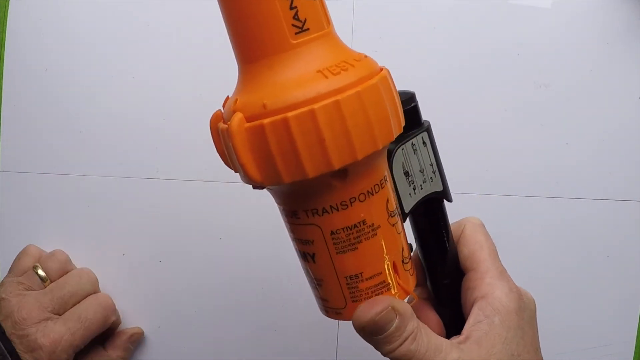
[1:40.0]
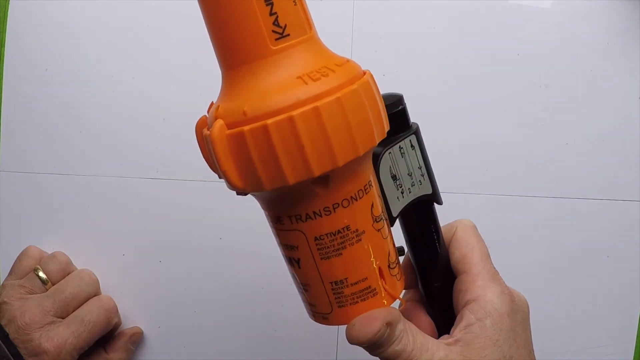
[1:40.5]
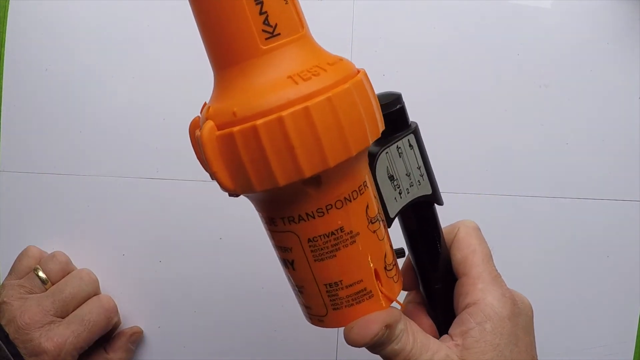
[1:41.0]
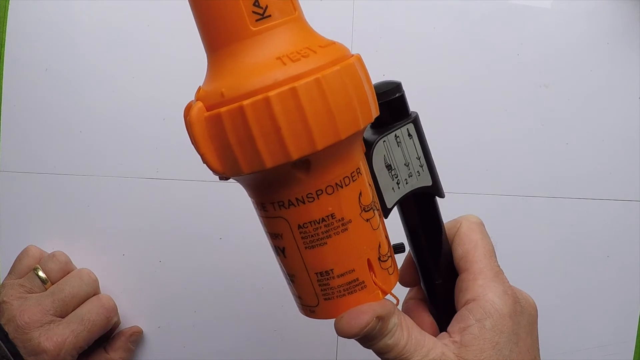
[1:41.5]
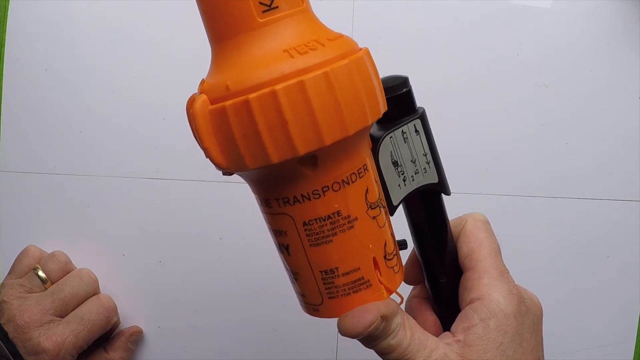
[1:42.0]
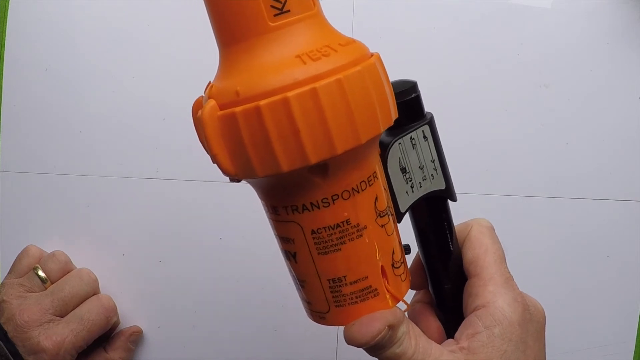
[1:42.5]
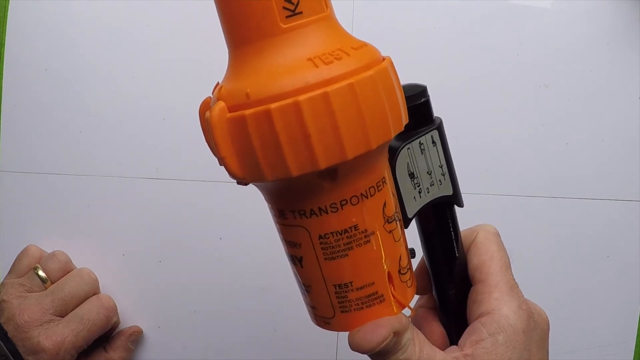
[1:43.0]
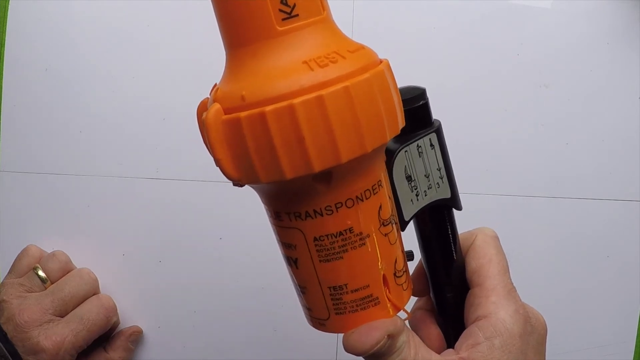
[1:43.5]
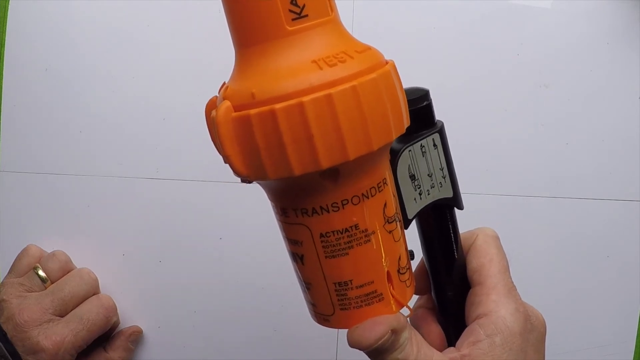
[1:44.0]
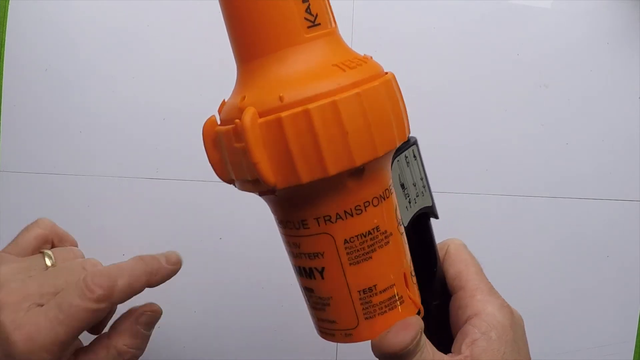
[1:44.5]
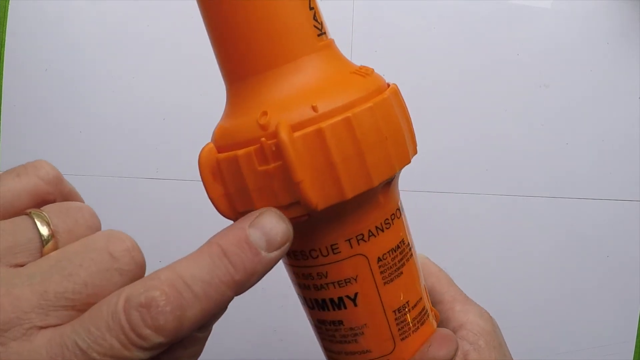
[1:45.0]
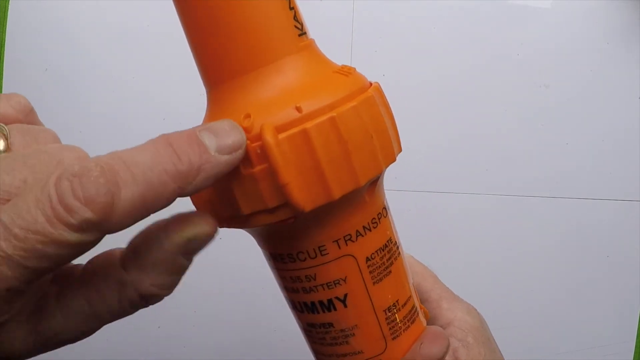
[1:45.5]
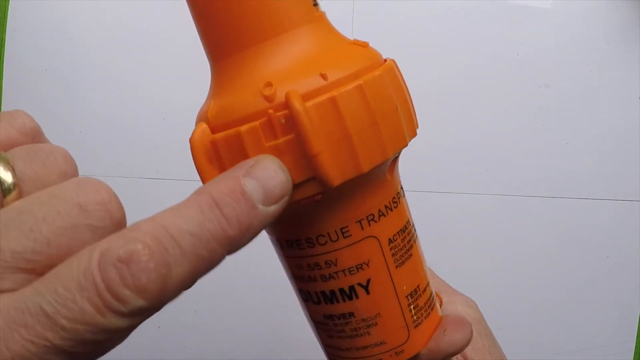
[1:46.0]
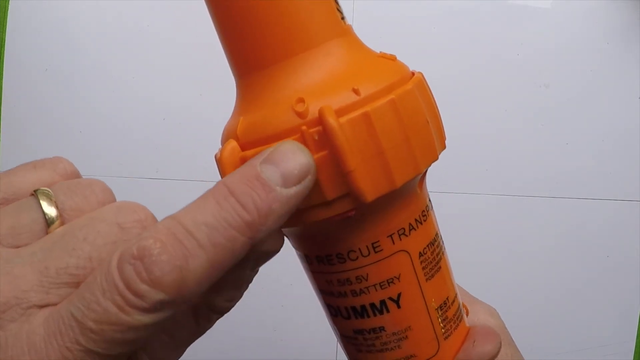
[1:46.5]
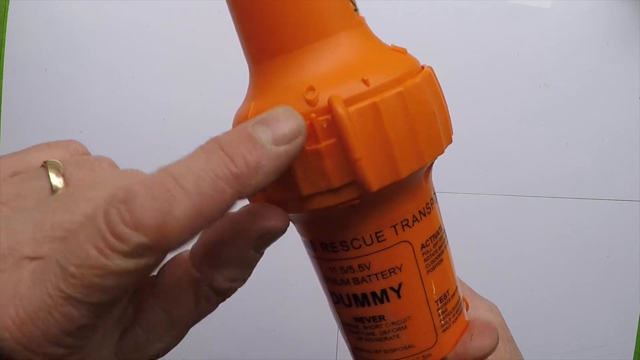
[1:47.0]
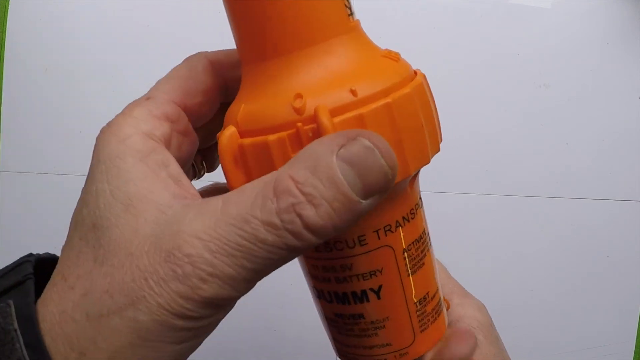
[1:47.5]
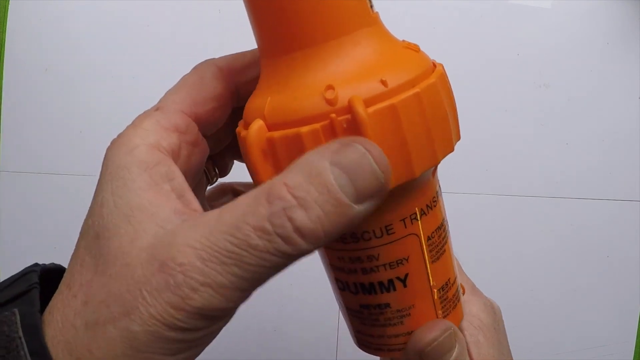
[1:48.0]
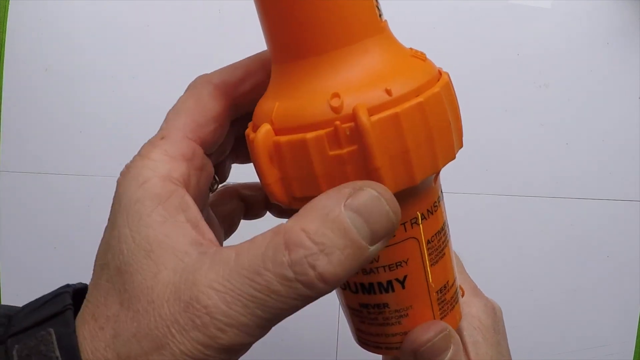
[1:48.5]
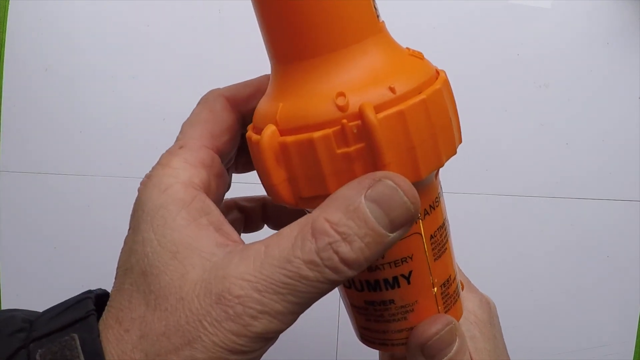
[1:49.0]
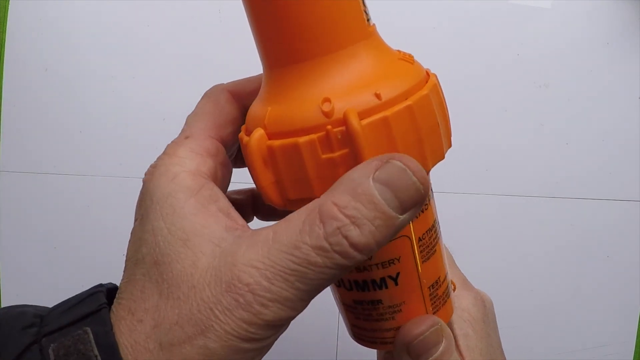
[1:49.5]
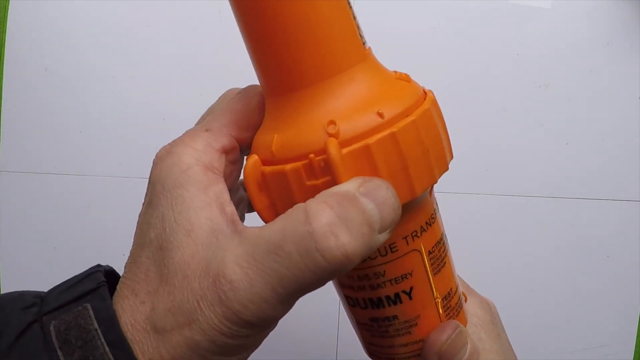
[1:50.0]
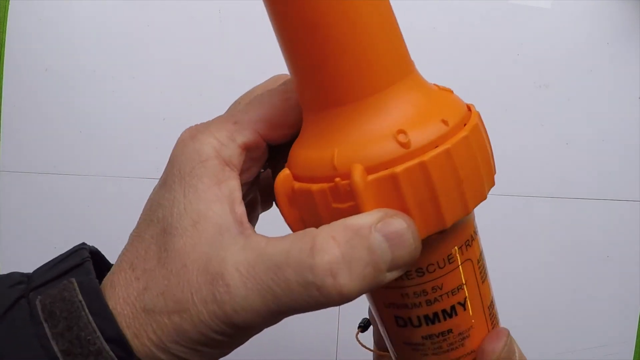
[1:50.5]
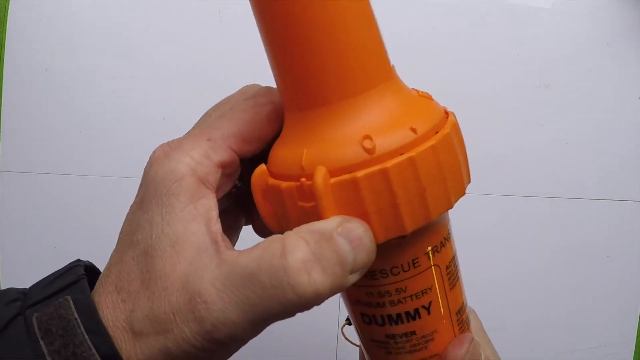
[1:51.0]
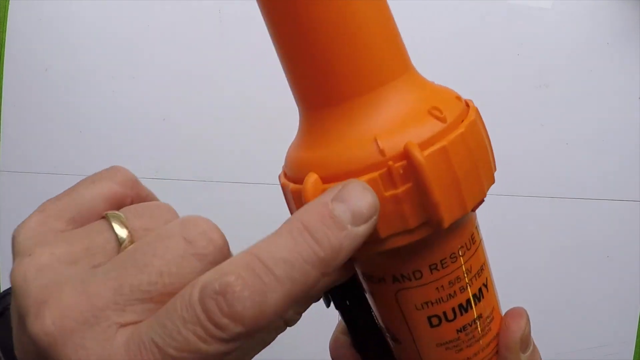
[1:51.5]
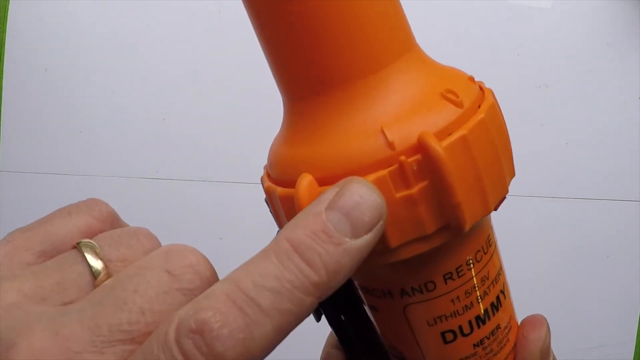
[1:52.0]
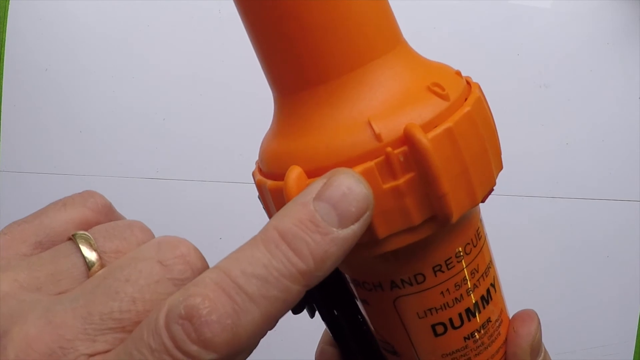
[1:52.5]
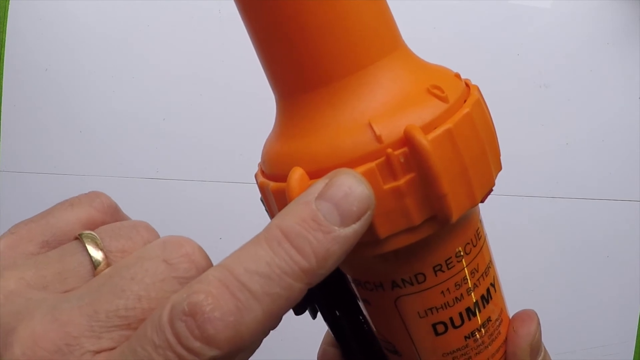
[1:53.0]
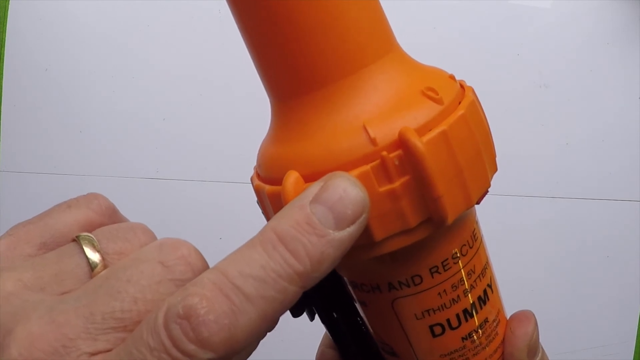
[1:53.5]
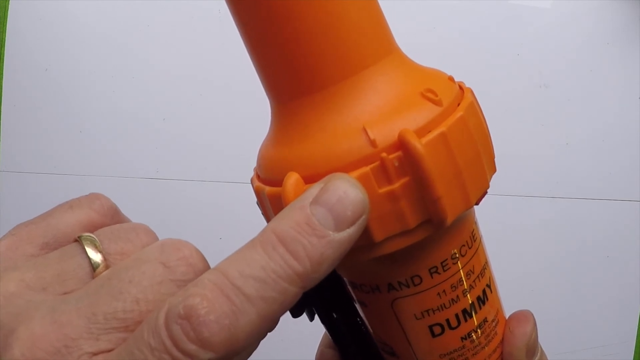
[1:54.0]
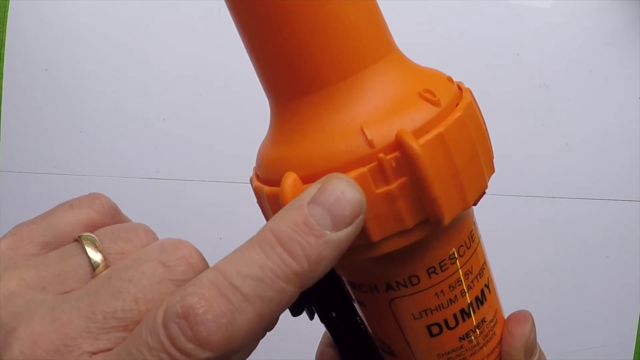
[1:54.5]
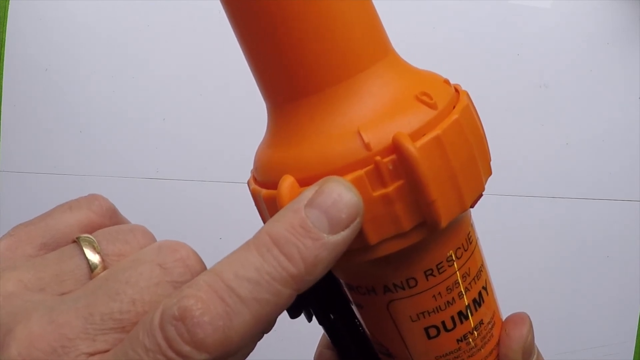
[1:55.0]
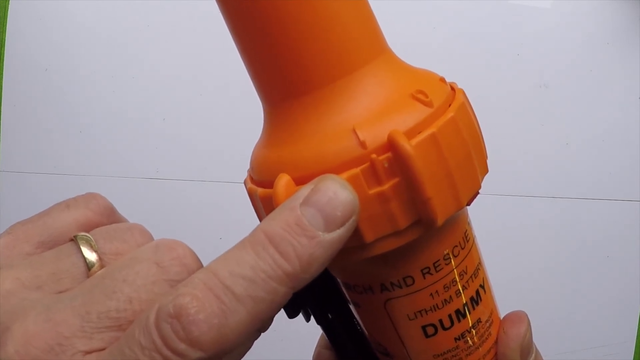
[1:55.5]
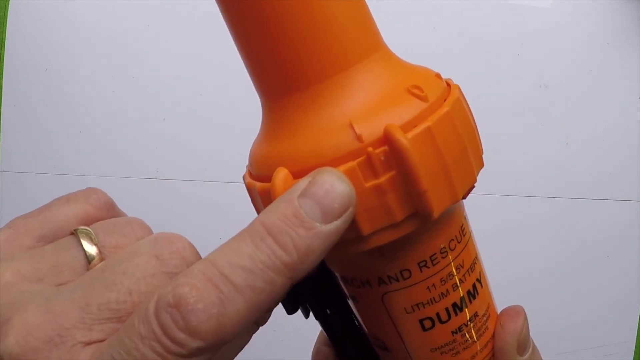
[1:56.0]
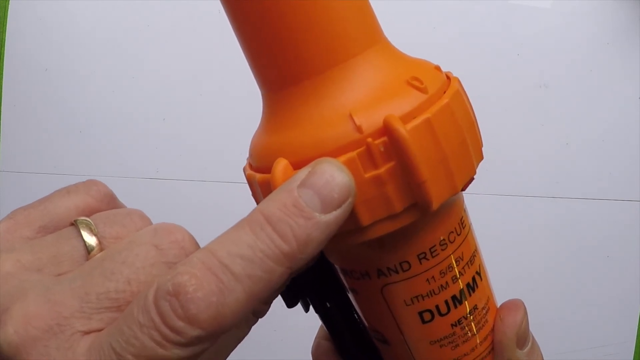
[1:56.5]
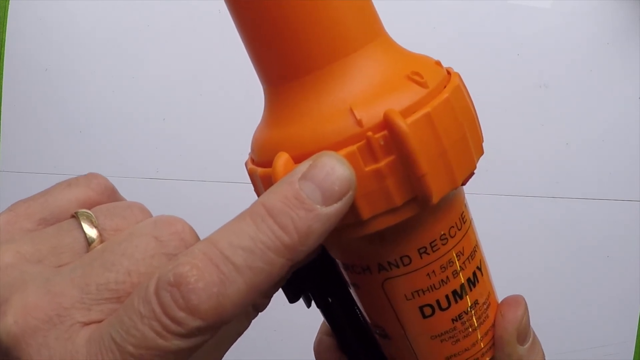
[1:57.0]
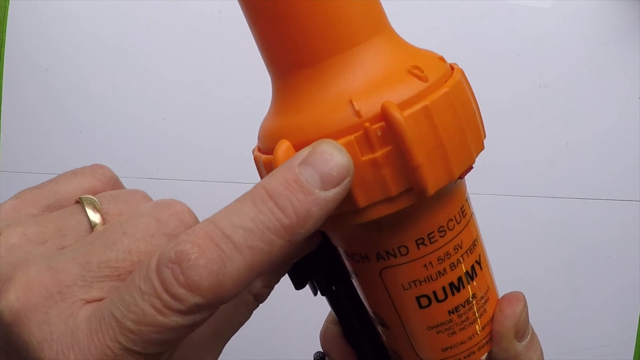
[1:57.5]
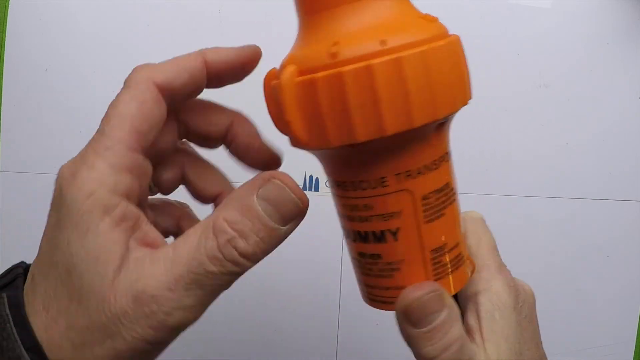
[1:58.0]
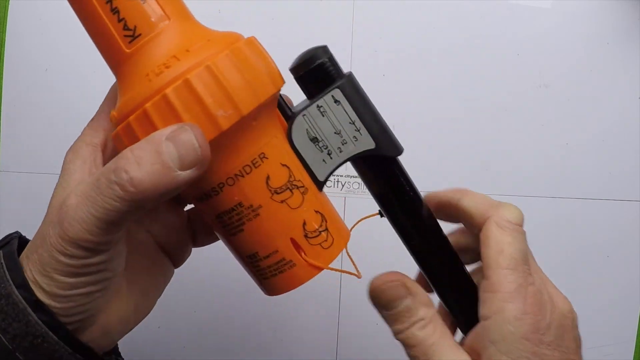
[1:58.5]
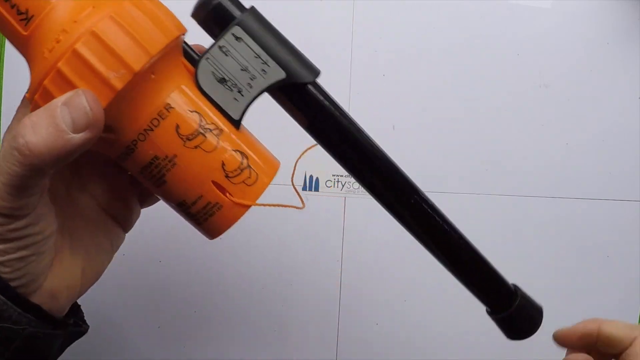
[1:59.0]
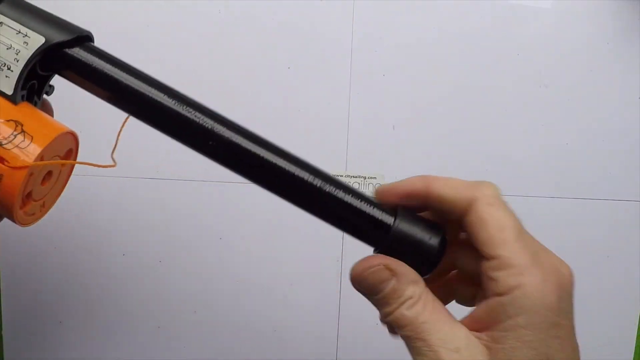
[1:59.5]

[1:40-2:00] The individual holds the orange machine with a long black stick, which appears to have a wire plugged into it, against the white background. He wears a silver ring, and the fingers of his right hand are clenched around the object. The camera angle pans around as he moves his finger up toward the test knob, showing where the knob is turned to perform the test. He moves his hands up and down, spins the device and moves the lever, showing that it adjusts in multiple directions. At the bottom, it is shown to be a dummy tester, a model used for demonstrating how to use the product.